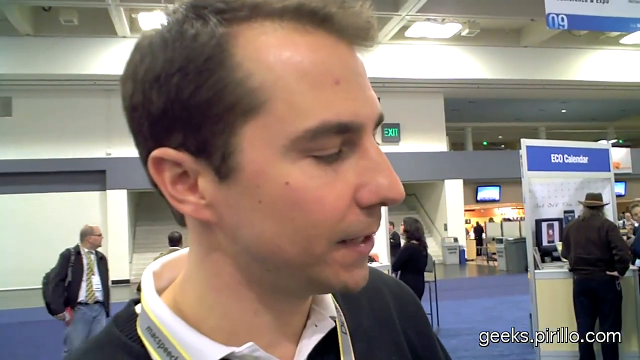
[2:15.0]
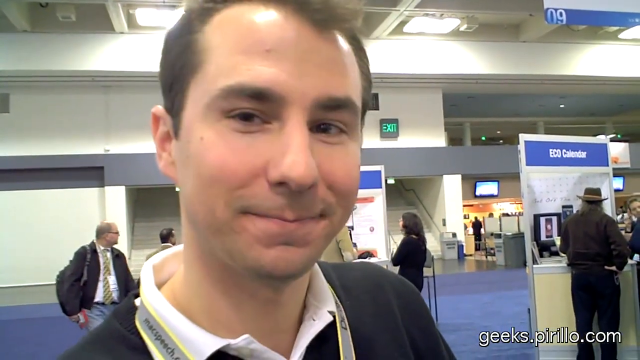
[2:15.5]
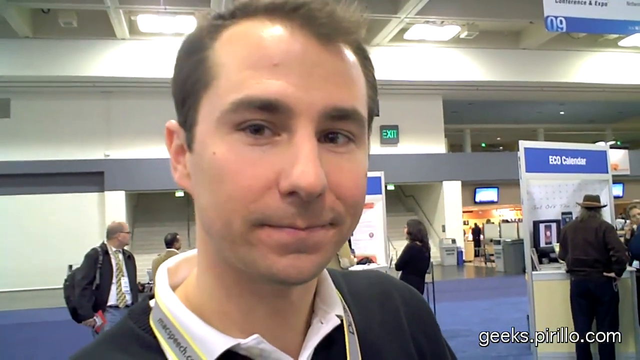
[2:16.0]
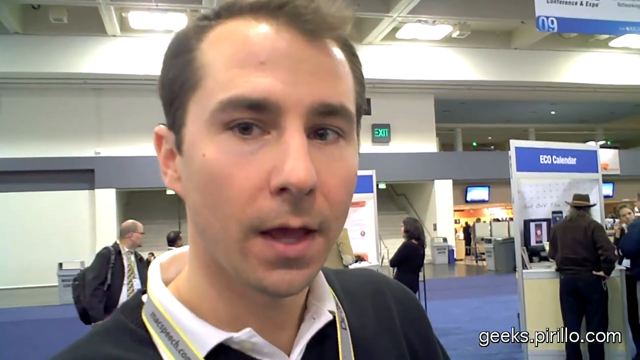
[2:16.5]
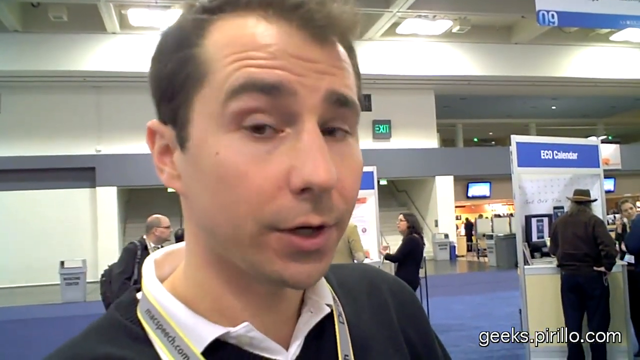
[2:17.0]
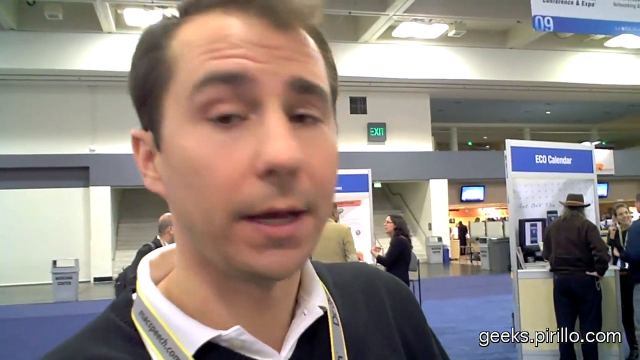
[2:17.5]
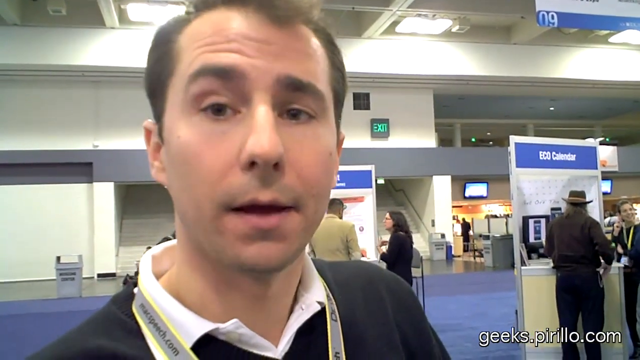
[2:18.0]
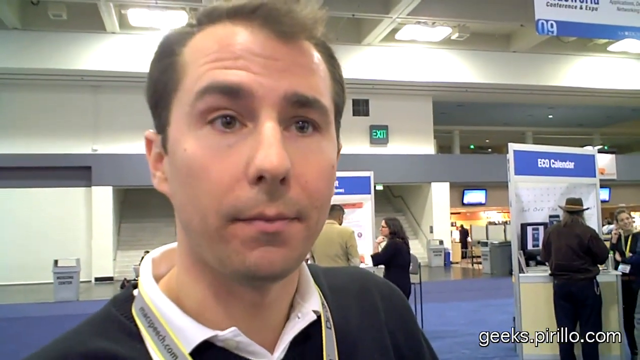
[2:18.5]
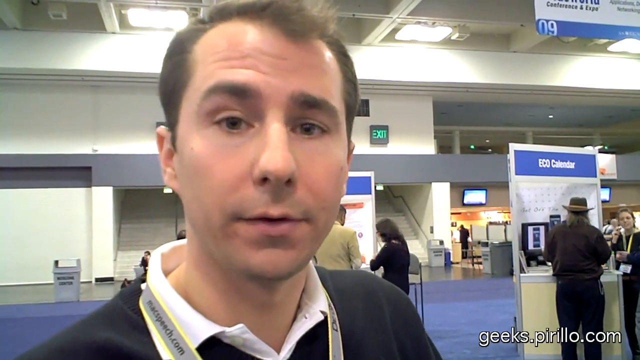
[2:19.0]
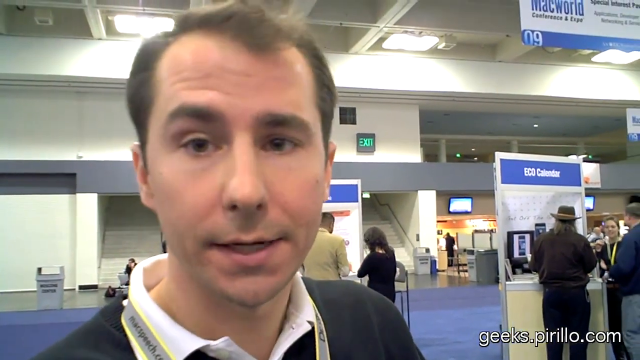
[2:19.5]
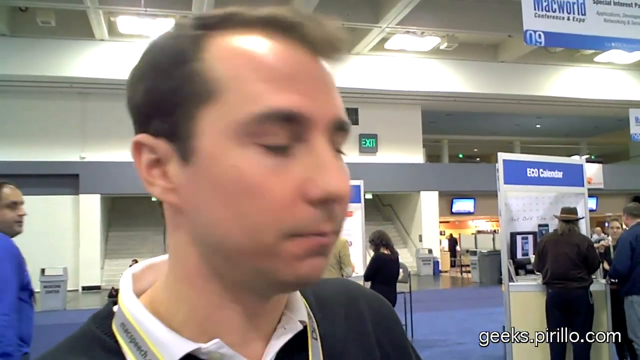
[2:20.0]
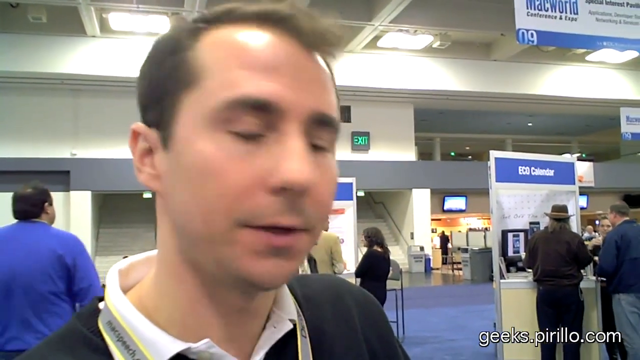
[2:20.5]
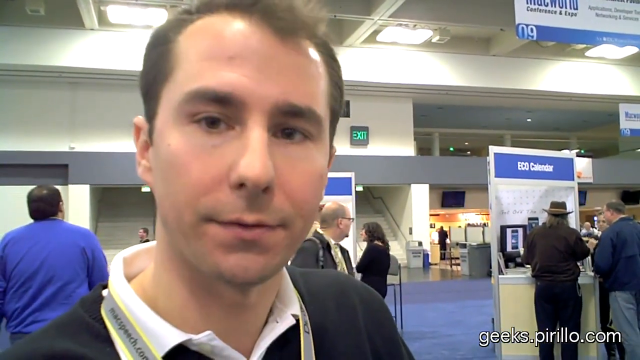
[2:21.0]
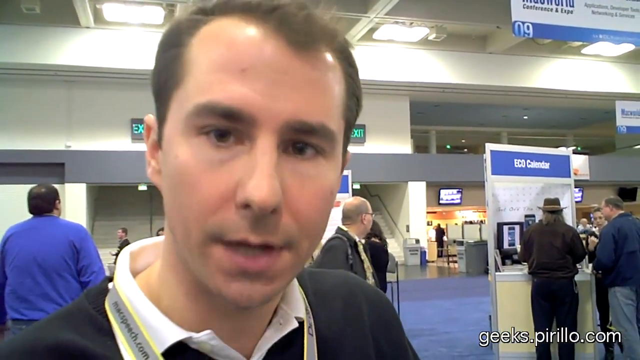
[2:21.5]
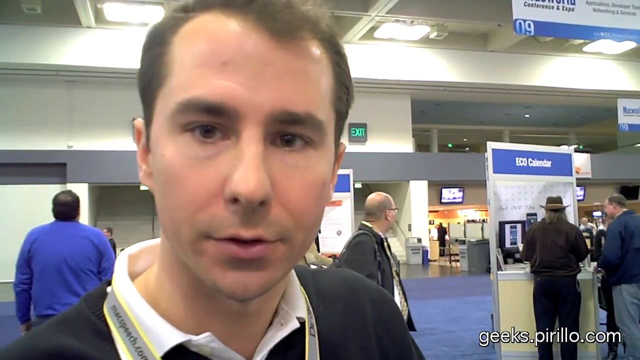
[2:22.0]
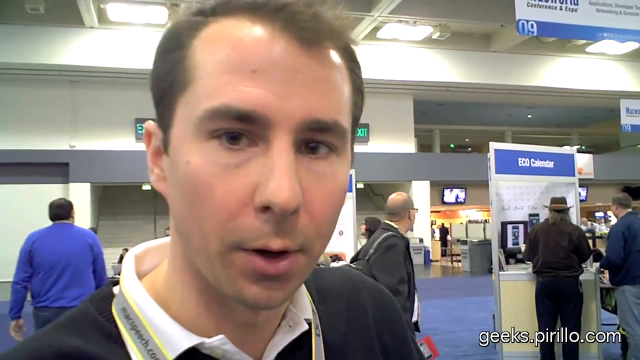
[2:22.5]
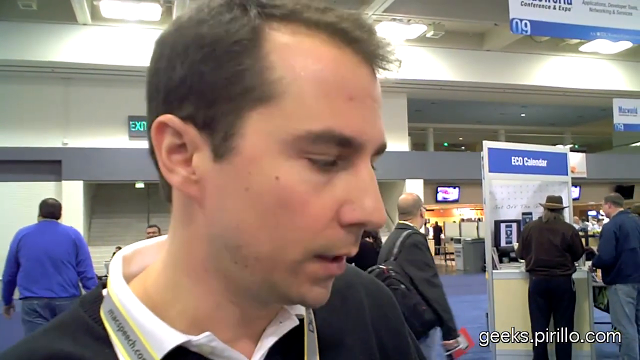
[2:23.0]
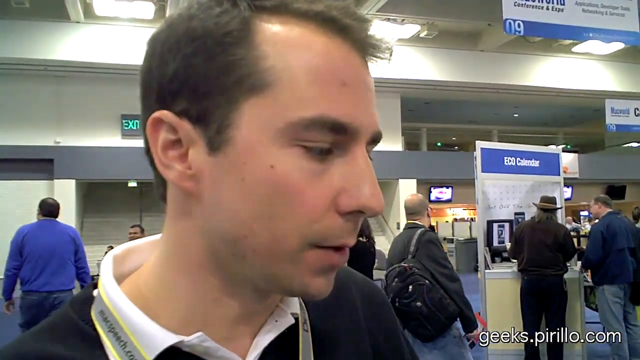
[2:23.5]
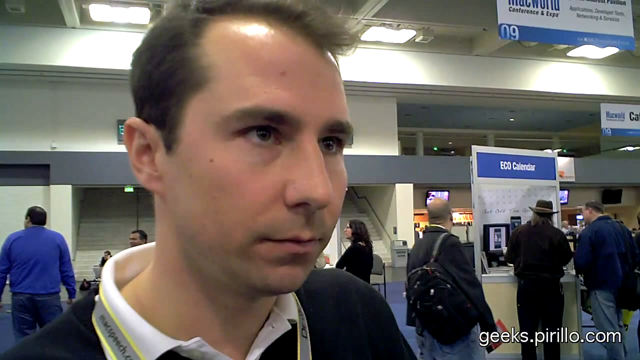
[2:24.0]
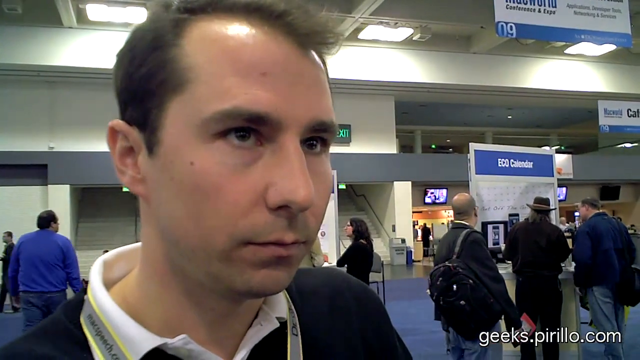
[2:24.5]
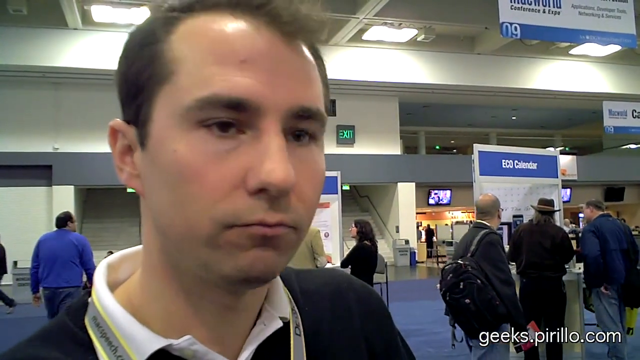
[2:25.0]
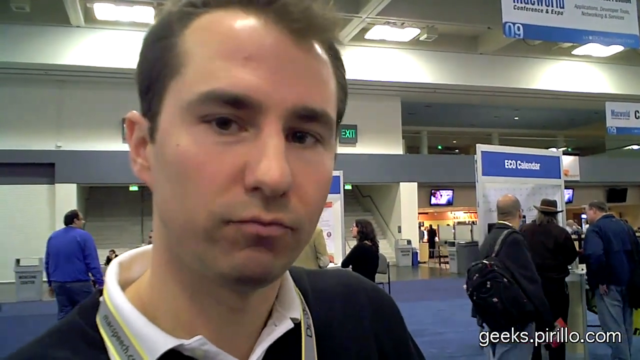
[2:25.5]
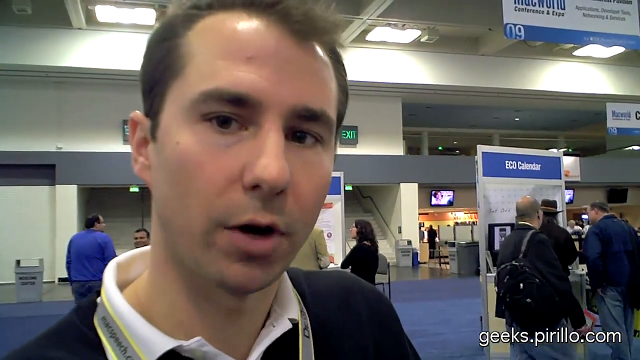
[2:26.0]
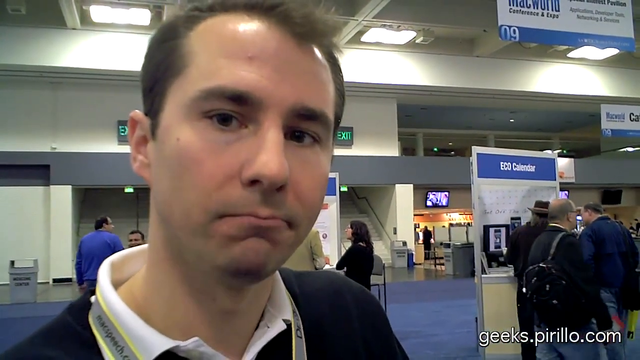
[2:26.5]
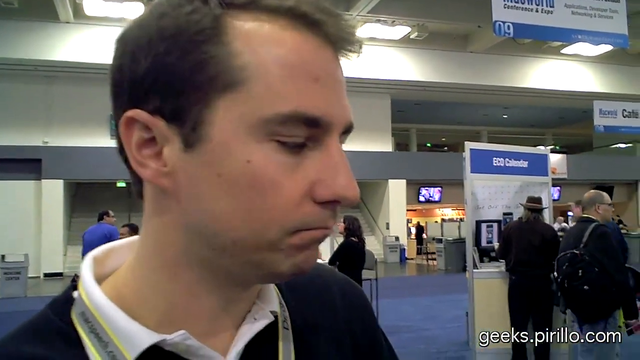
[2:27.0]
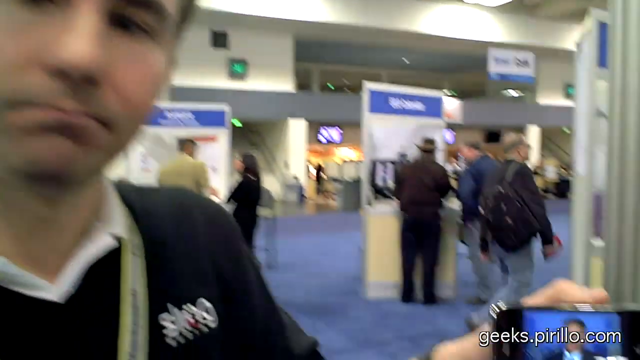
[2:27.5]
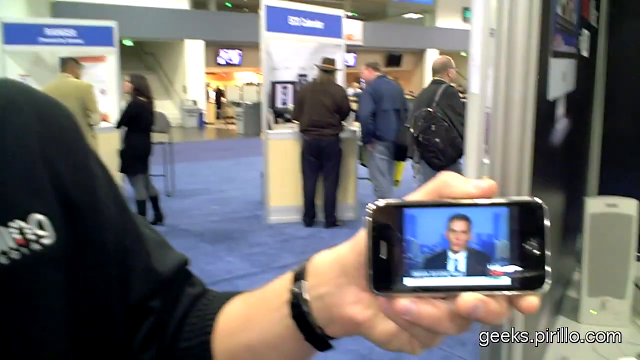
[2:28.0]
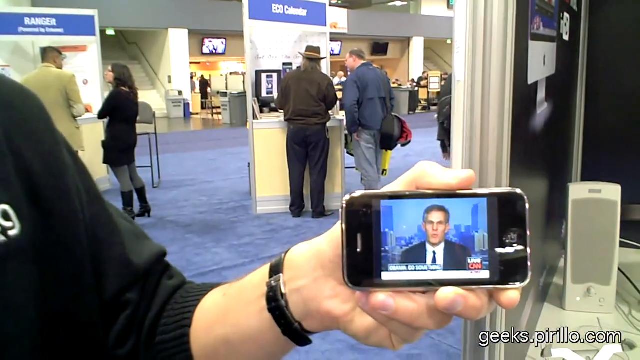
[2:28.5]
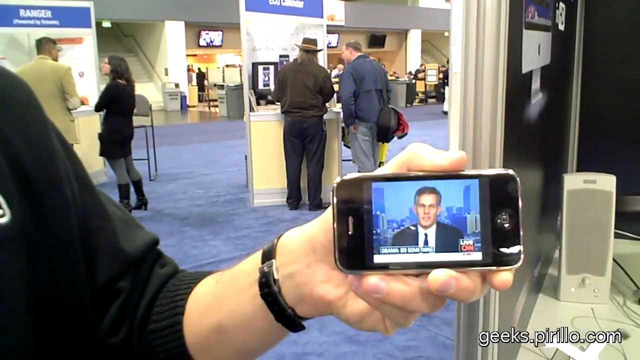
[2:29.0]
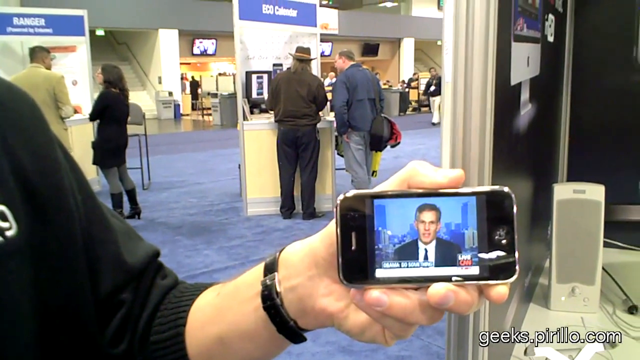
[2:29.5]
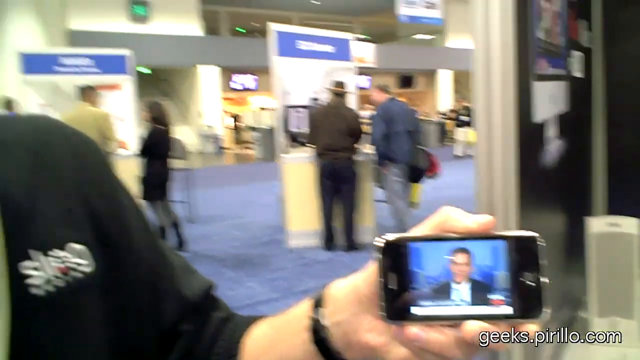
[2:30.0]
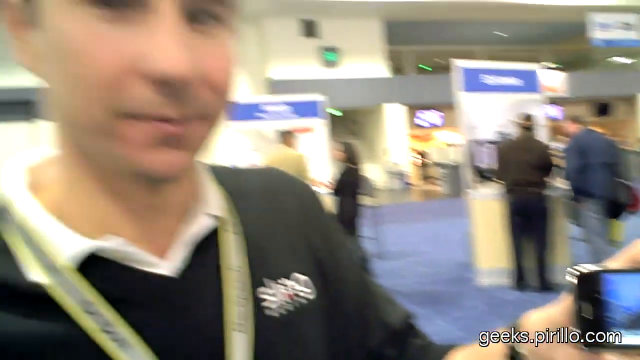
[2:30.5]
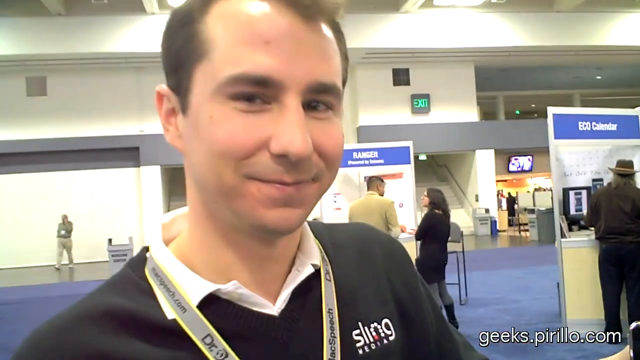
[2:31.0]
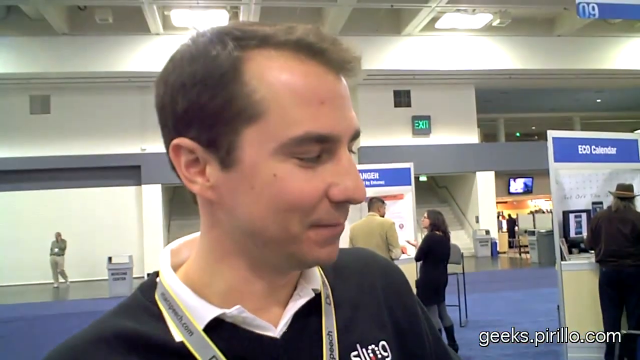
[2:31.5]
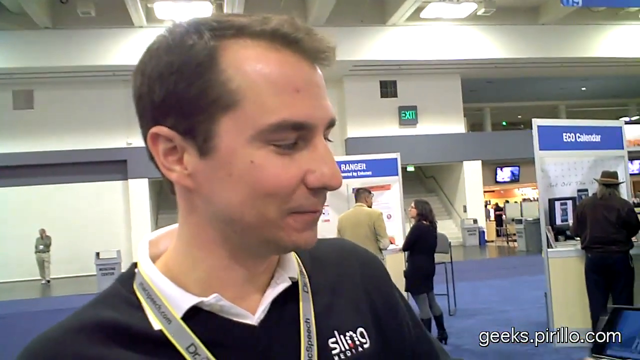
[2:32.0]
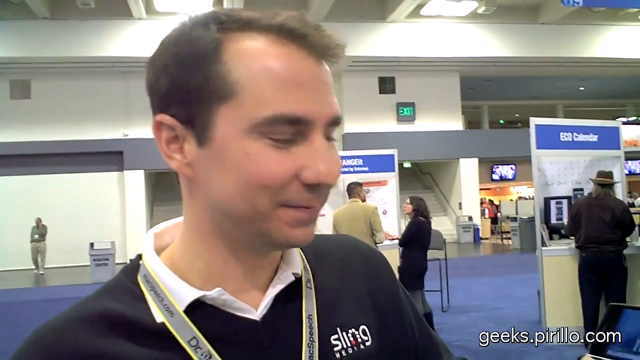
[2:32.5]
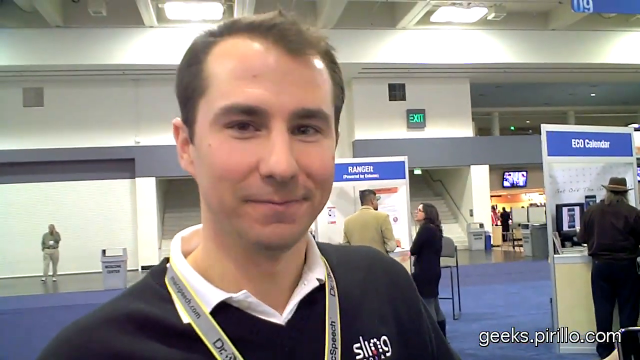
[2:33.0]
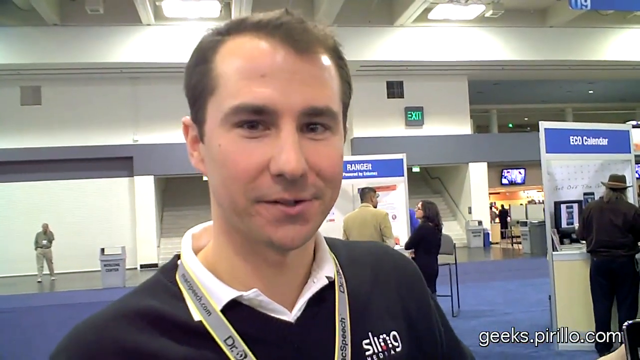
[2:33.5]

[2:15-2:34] The other video thumbnails are visible, and at the top is the channel owner's neon-colored user logo showing their face, along with the title "How to Watch Live TV on Your iPhone Slingbox." A share arrow is on the right, along with another picture of the logo on the right-hand side of the screen. On the left-hand side are two thumbnails of related videos: one shows what looks like a man with glasses and a mustache and reads "GeekVlog043 video test for my new Samsung Galaxy S2," and the one below reads "Tech News and Reviews (TLDR)." The man who has been holding the iPhone speaks and nods, the person holding the camera nods in agreement, the camera pans back to the phone, and then it pans back to the man, who is smiling and nodding.